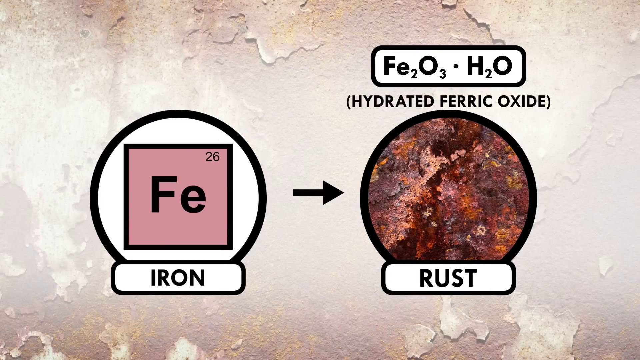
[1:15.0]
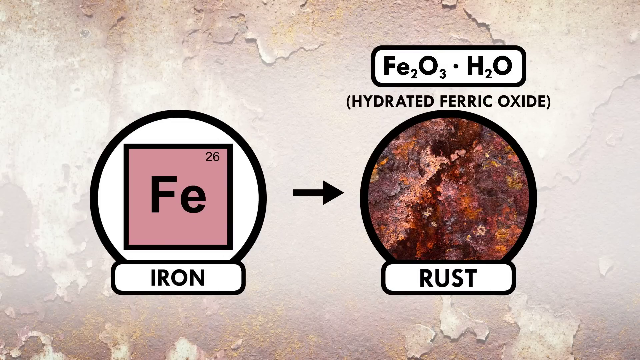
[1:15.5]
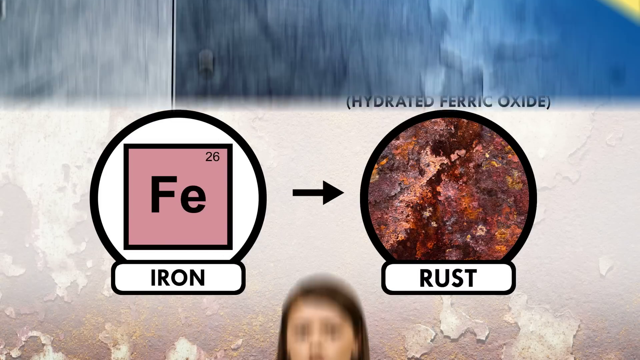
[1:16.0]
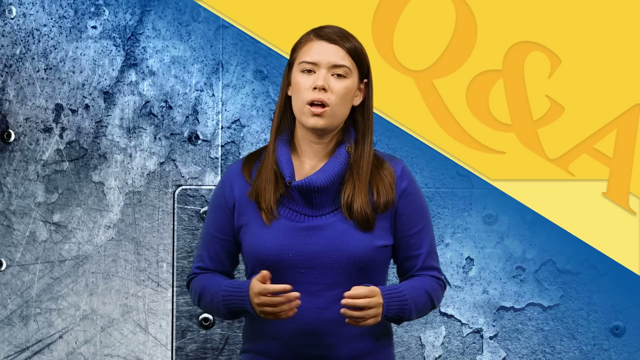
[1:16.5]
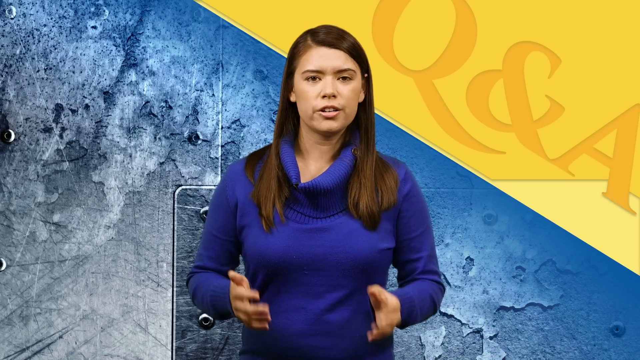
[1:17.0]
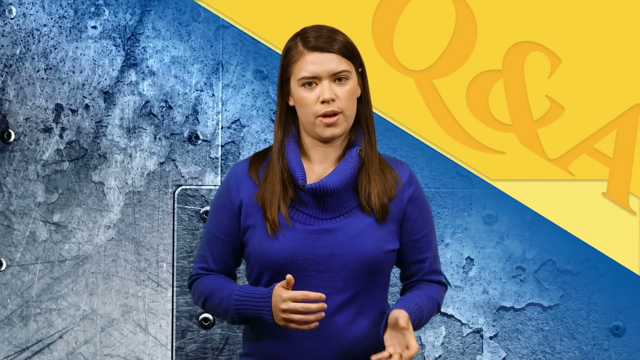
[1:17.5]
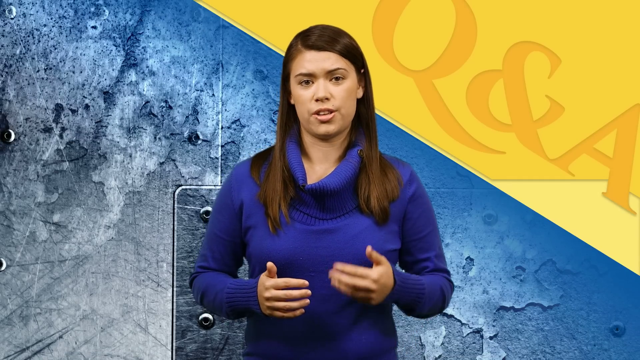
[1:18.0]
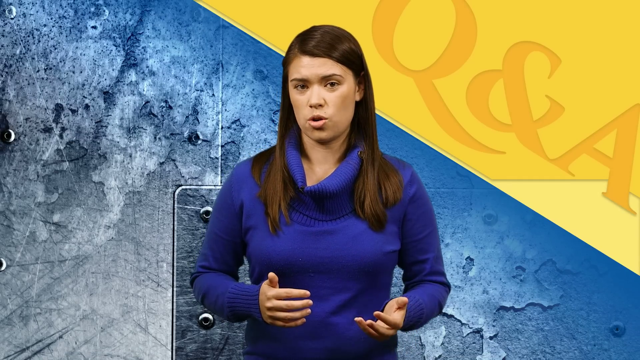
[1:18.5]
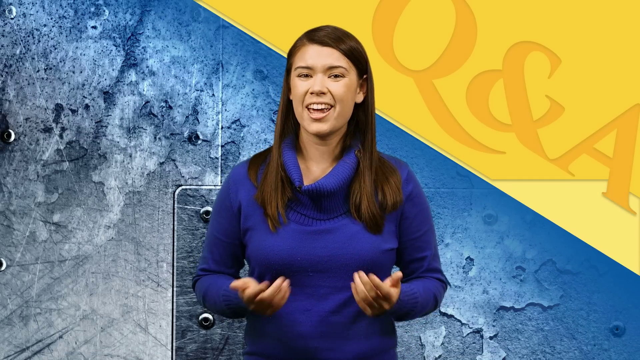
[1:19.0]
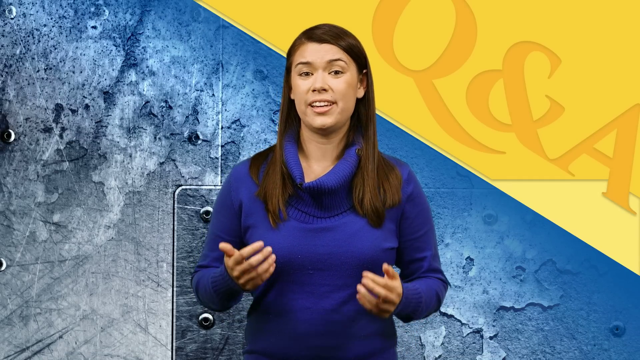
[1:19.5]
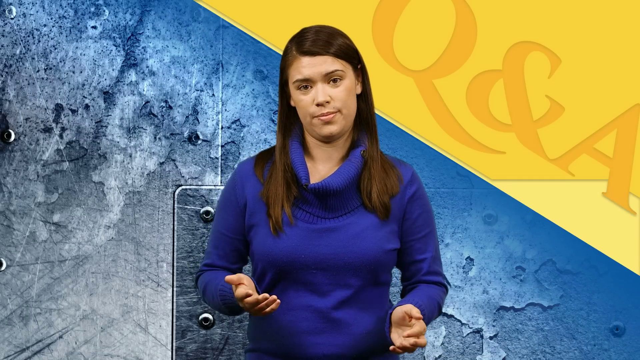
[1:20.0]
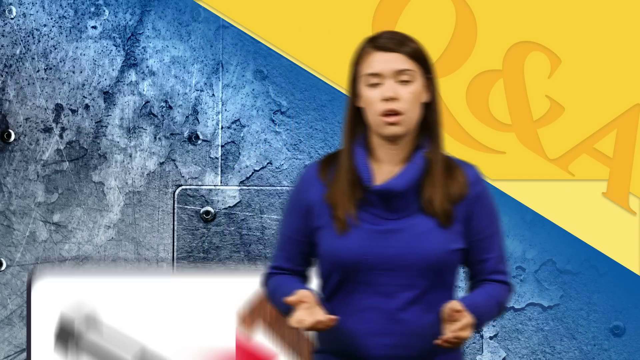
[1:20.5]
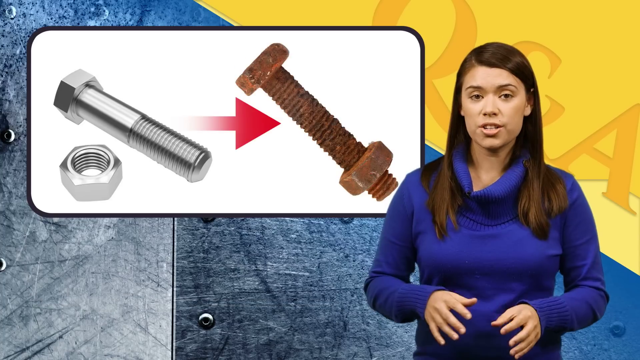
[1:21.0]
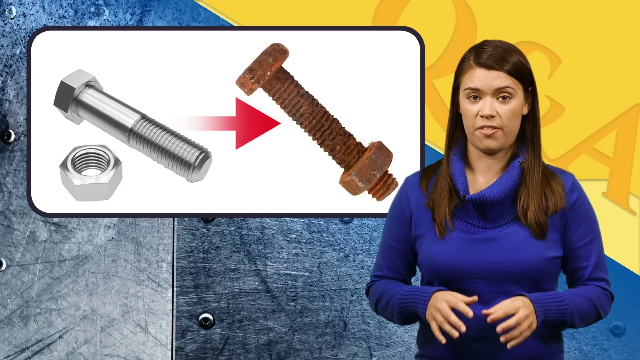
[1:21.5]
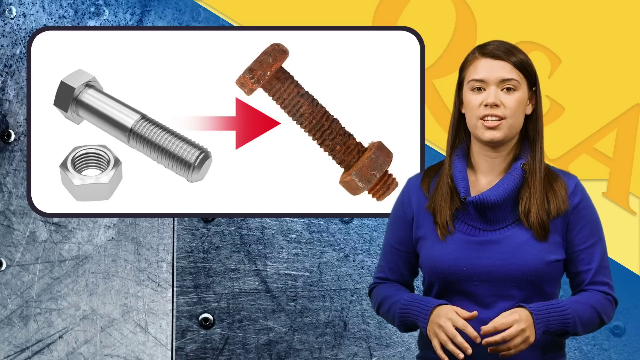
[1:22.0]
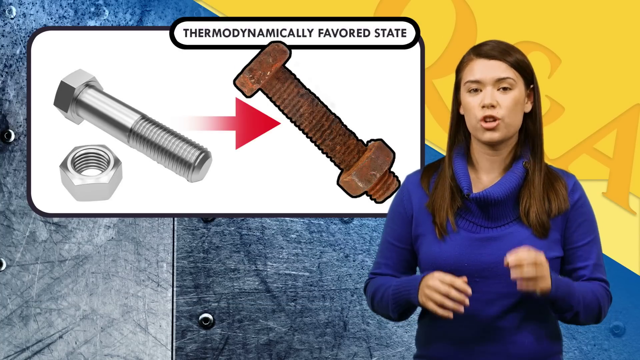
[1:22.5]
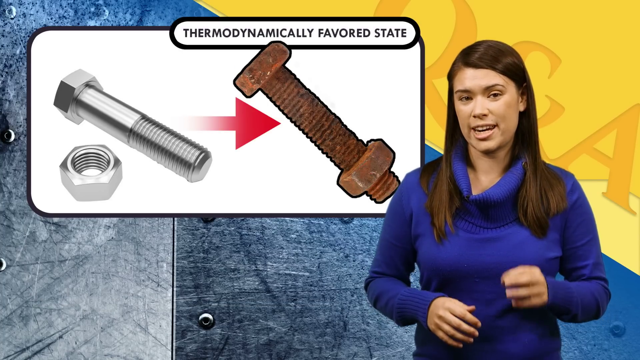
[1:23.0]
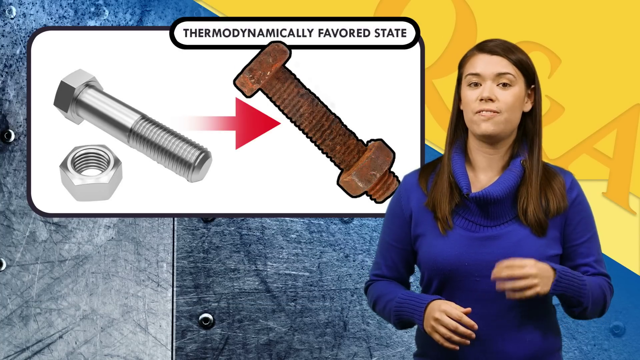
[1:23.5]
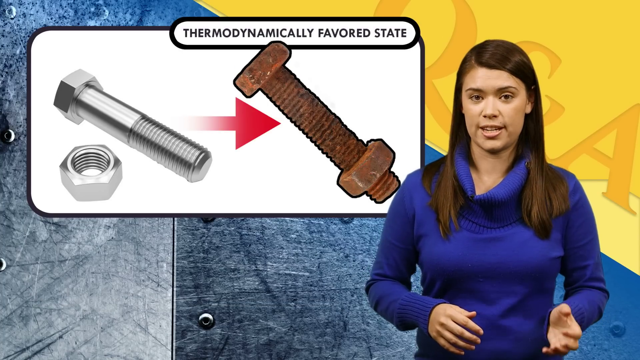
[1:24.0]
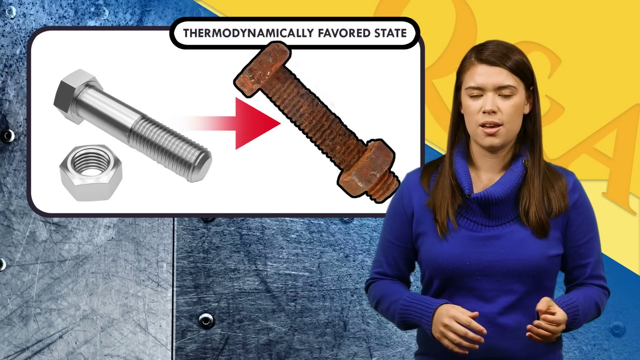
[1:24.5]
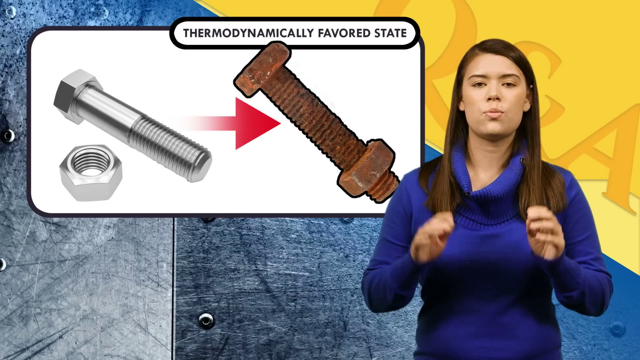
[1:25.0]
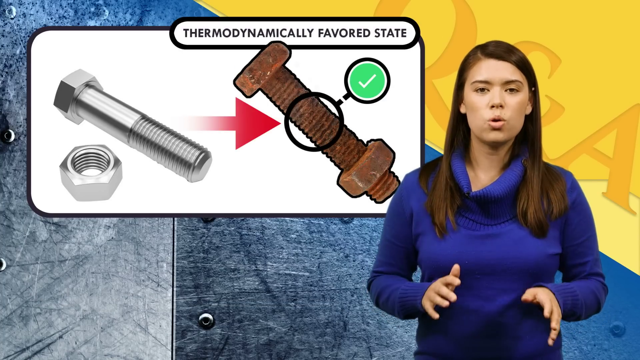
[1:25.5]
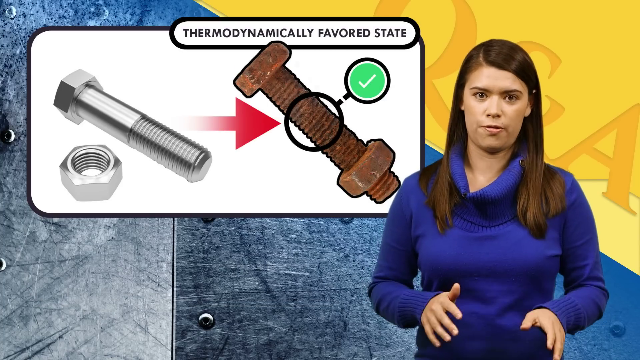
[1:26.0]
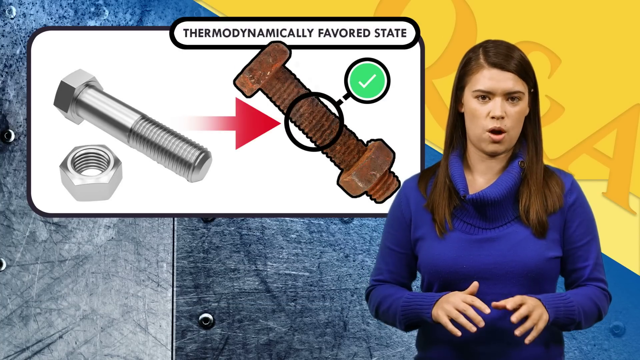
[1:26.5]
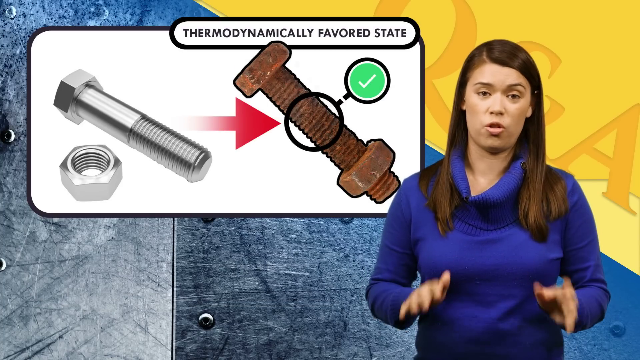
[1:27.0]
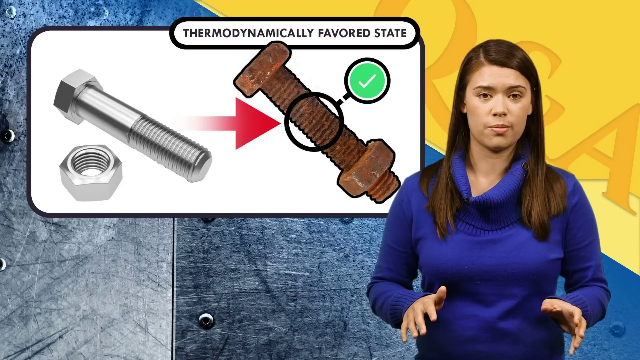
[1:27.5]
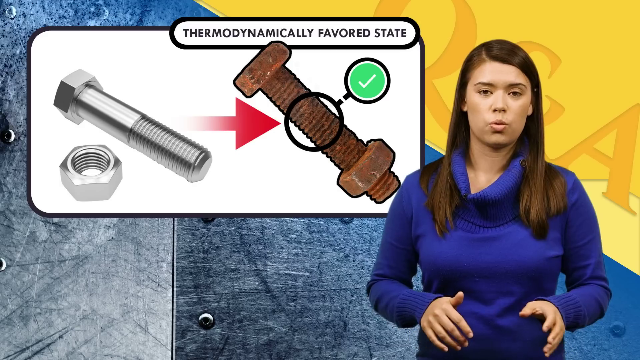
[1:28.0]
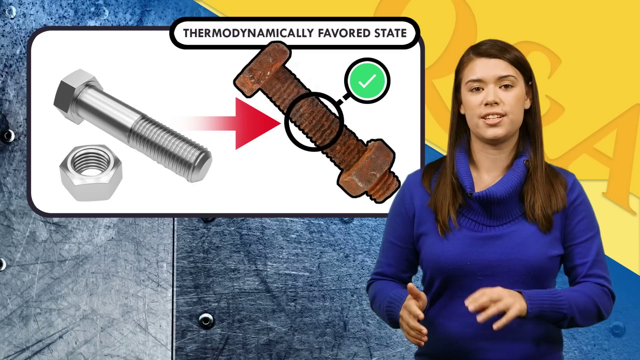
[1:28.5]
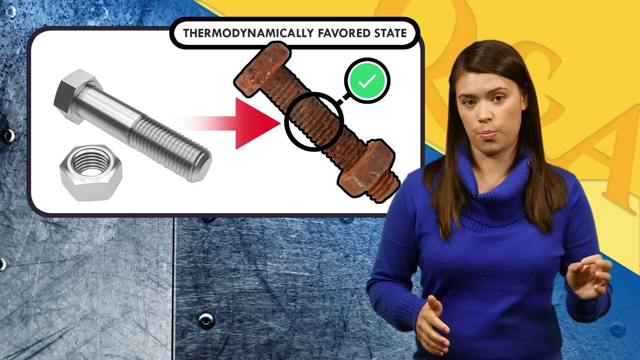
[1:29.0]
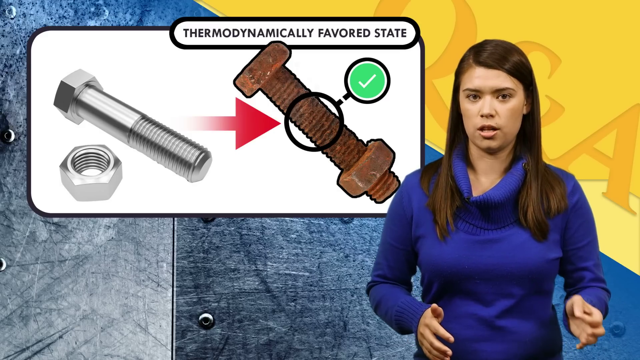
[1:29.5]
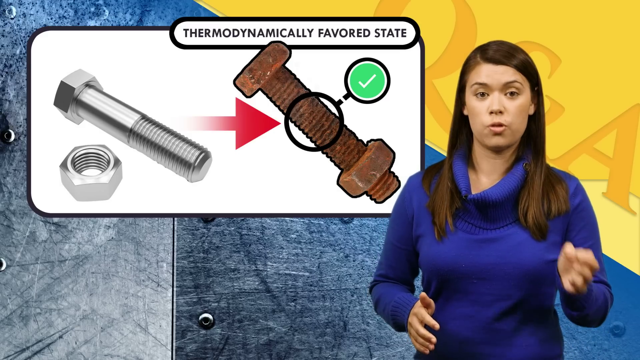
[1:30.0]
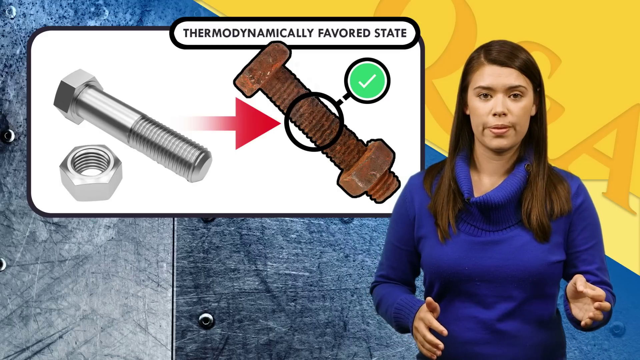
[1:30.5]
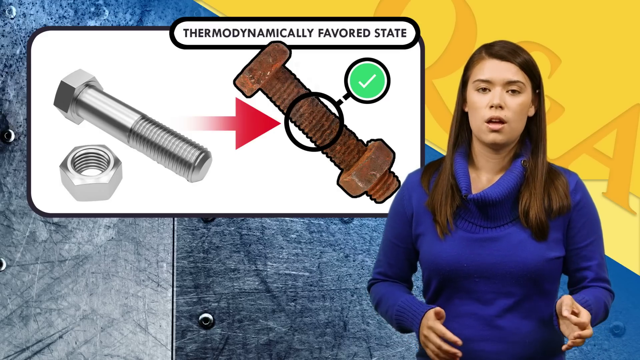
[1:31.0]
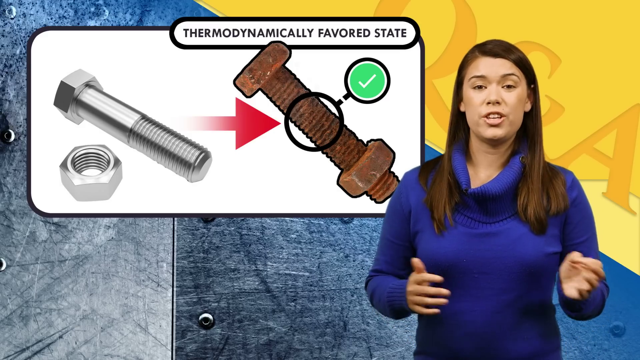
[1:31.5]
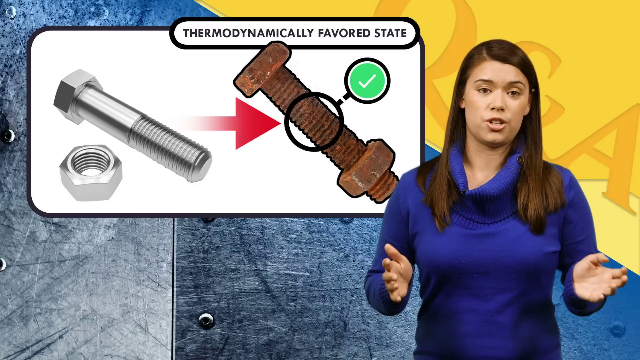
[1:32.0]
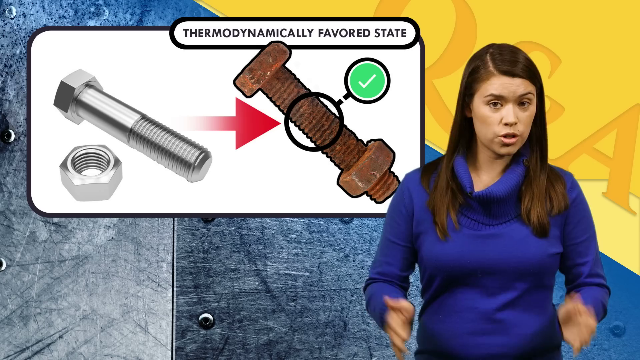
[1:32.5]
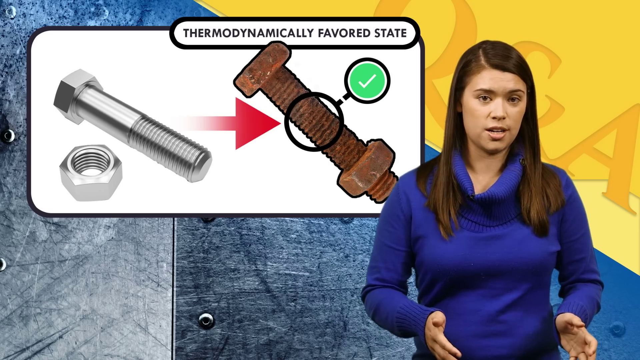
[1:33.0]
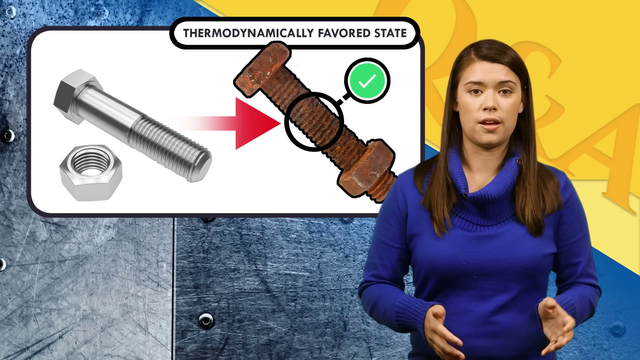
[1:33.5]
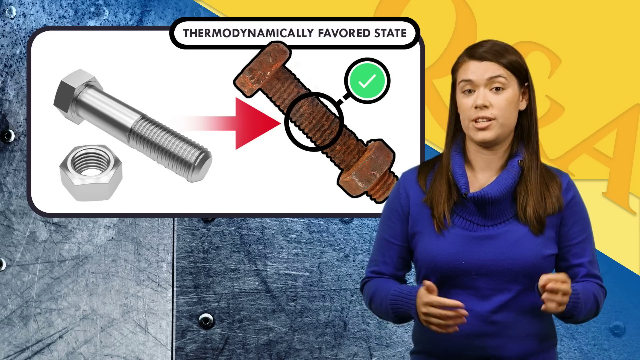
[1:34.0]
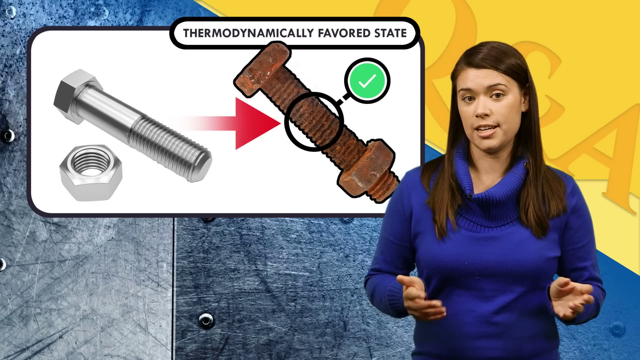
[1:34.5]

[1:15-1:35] A picture of iron and rust appears, and Sophia speaks to the camera, standing in front of a blue and yellow board. A still shows a newly made bolt and nut, with the nut threaded onto the bolt, and a red arrow pointing to a rusted-out bolt and nut, with the words "thermodynamic favored state". A green check mark is next to the rusted nut and bolt, and a circle is on the threads of the rusted nut and bolt. The video returns to Sophia with the same picture of the good nut and bolt and the rusted-out nut and bolt with the green check mark.